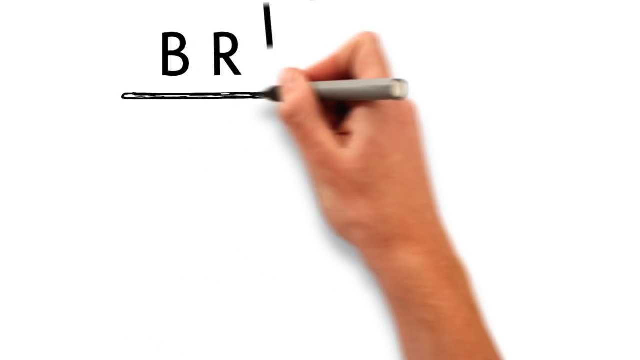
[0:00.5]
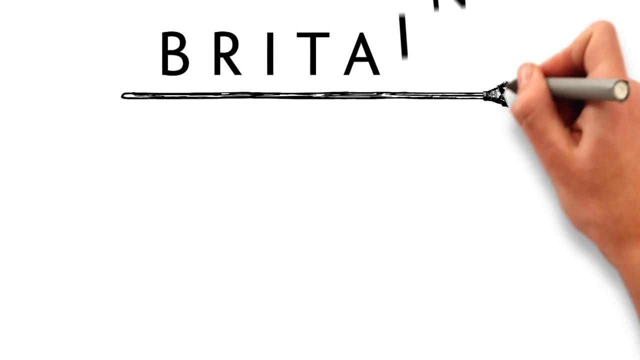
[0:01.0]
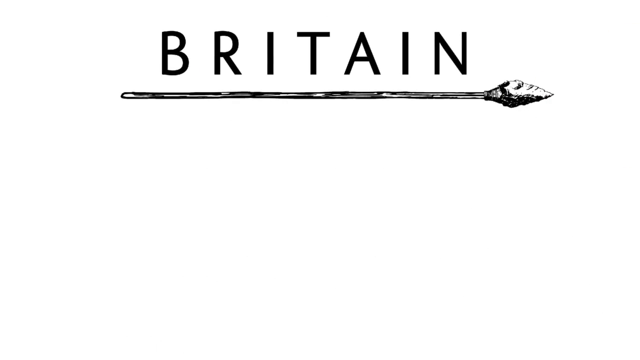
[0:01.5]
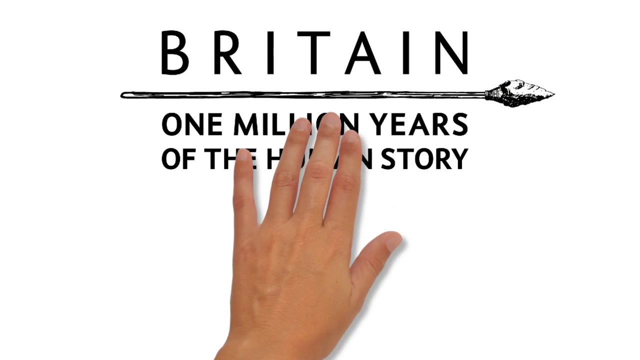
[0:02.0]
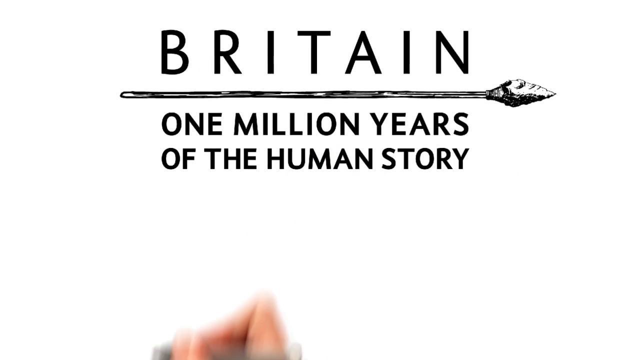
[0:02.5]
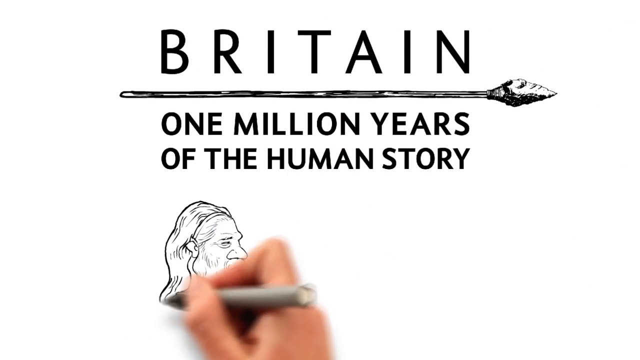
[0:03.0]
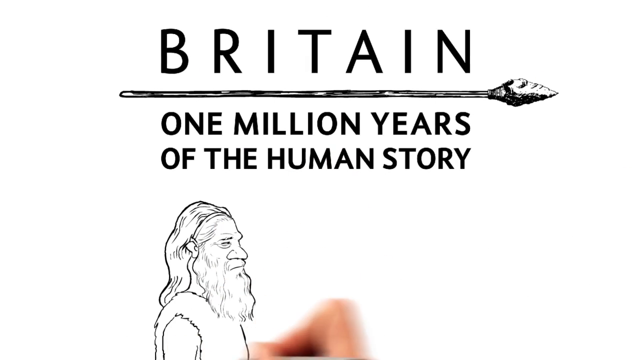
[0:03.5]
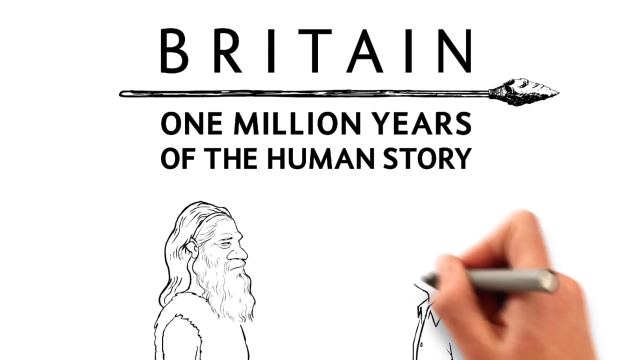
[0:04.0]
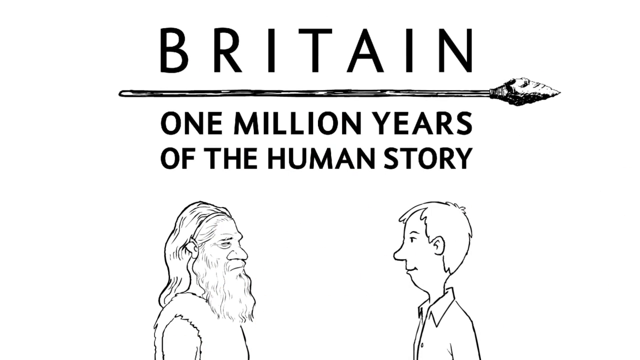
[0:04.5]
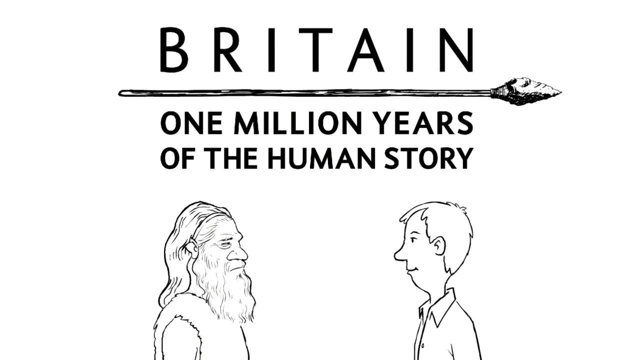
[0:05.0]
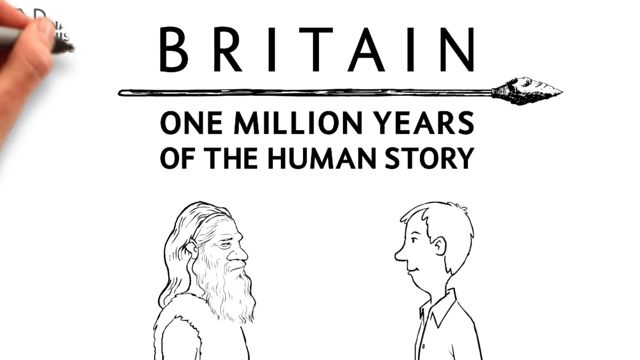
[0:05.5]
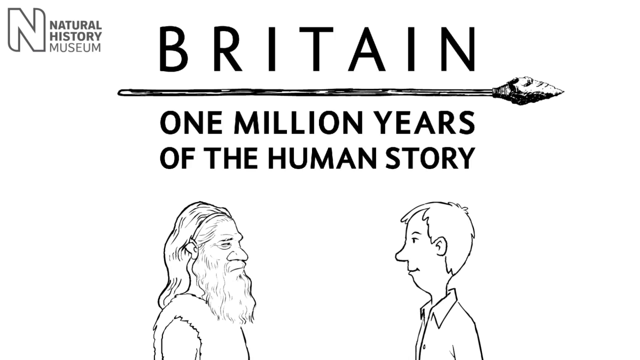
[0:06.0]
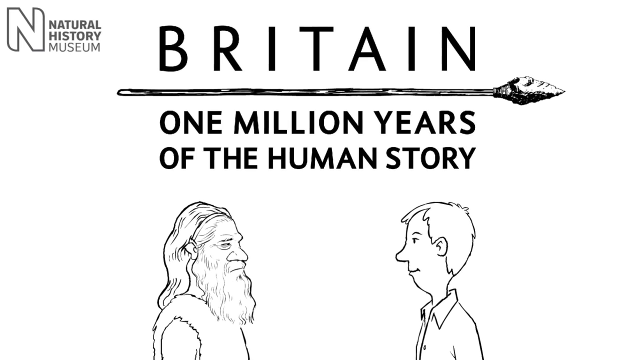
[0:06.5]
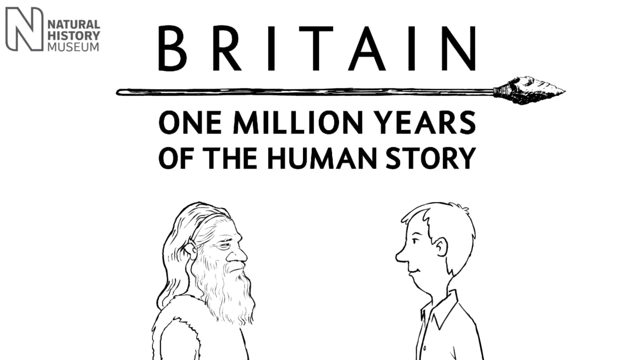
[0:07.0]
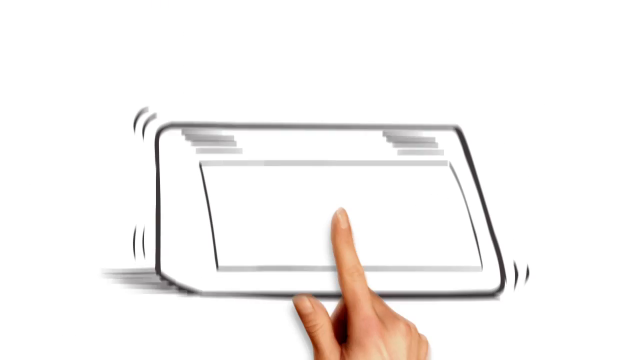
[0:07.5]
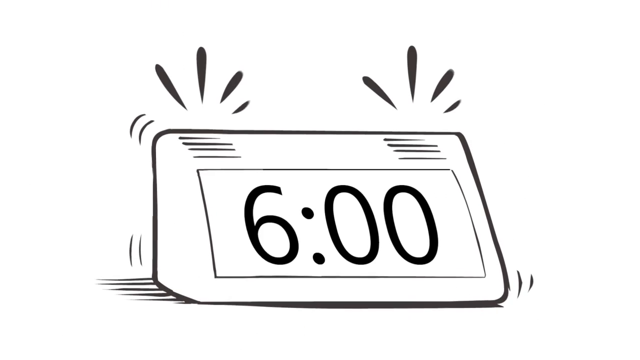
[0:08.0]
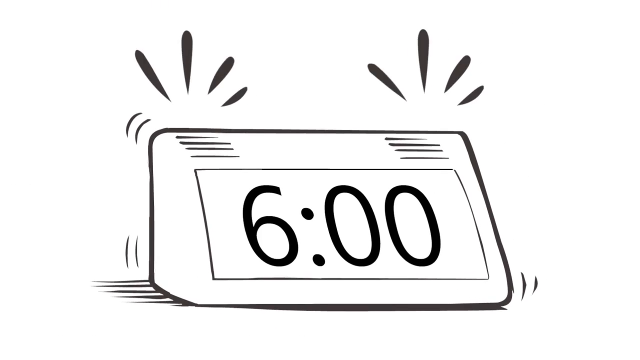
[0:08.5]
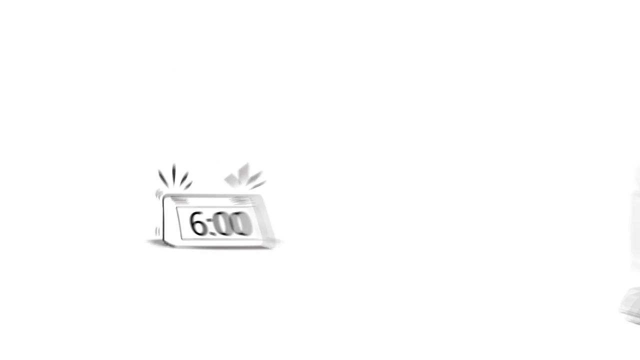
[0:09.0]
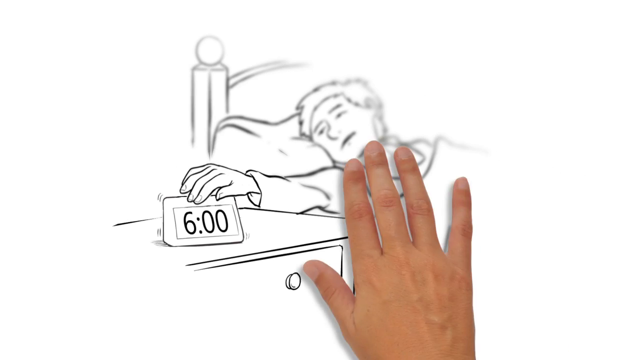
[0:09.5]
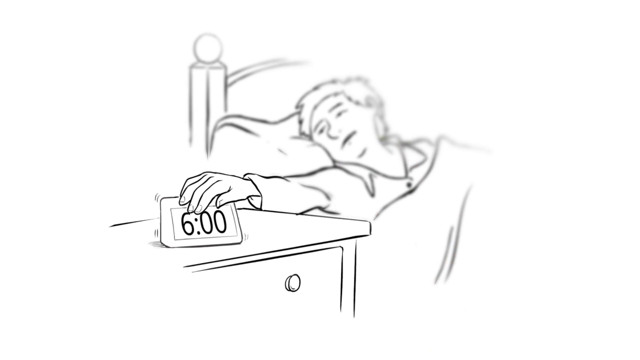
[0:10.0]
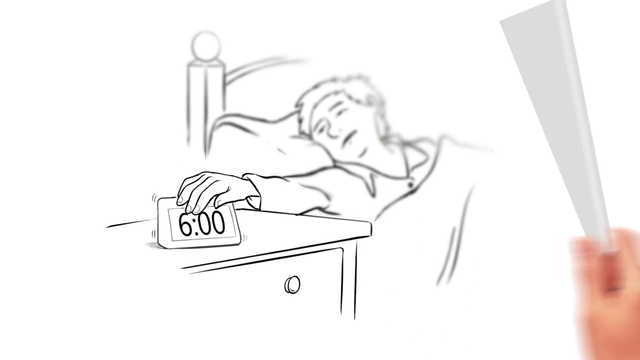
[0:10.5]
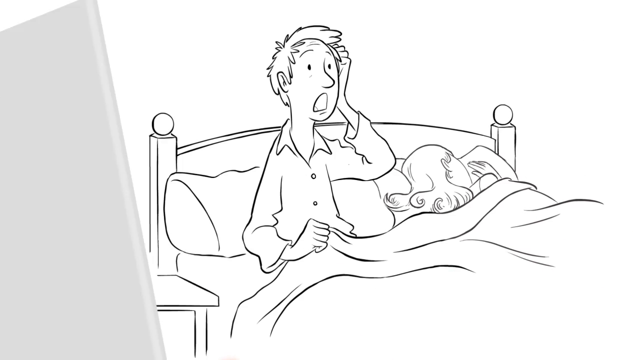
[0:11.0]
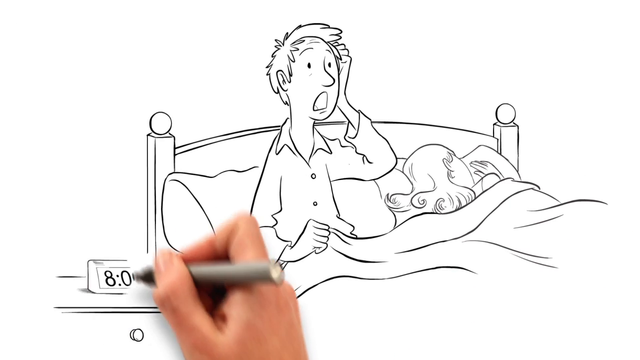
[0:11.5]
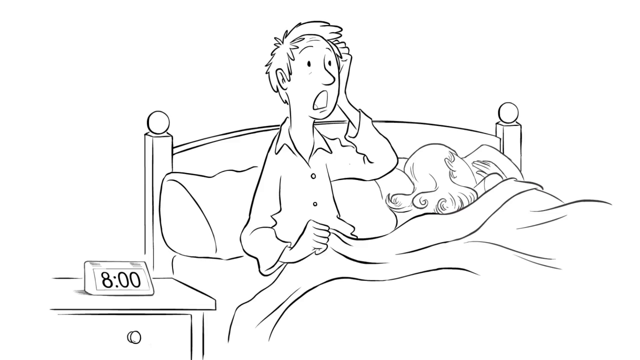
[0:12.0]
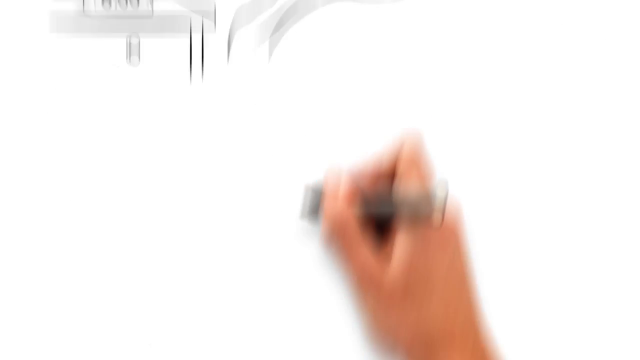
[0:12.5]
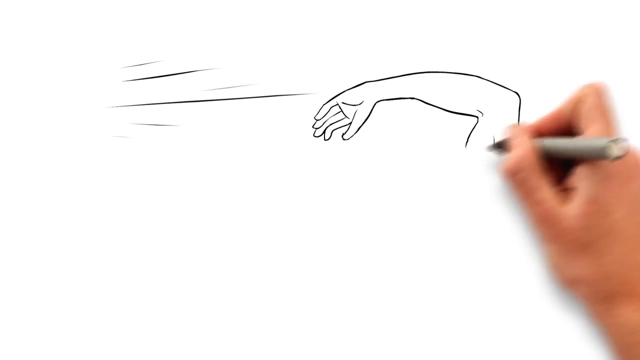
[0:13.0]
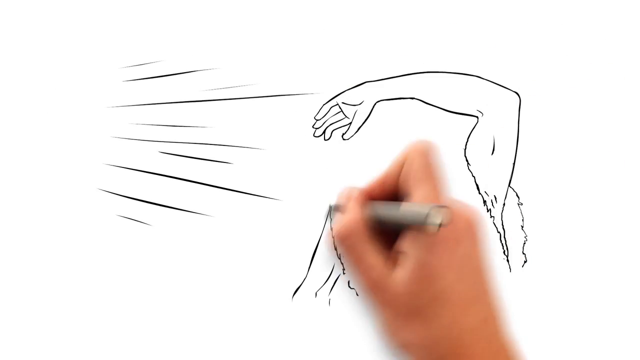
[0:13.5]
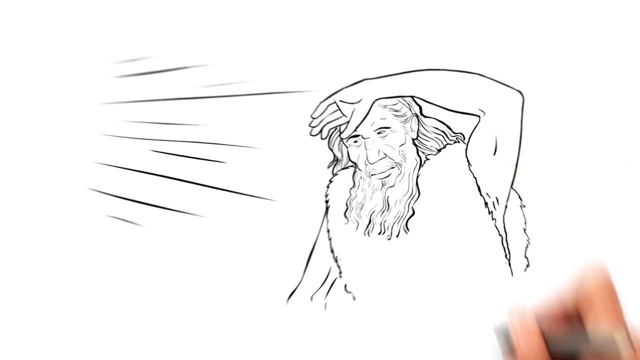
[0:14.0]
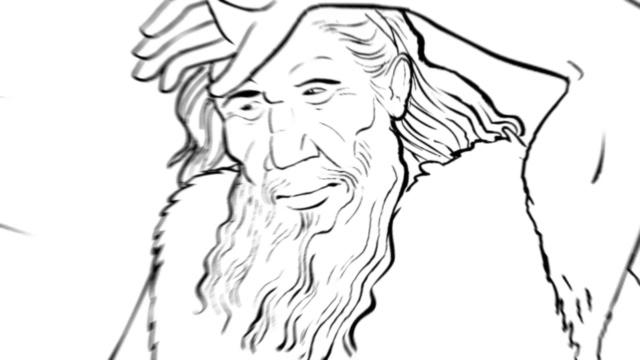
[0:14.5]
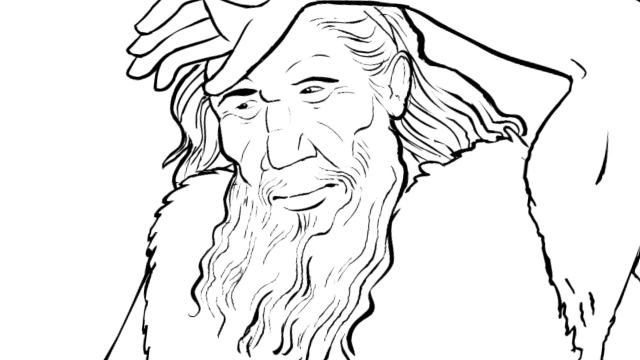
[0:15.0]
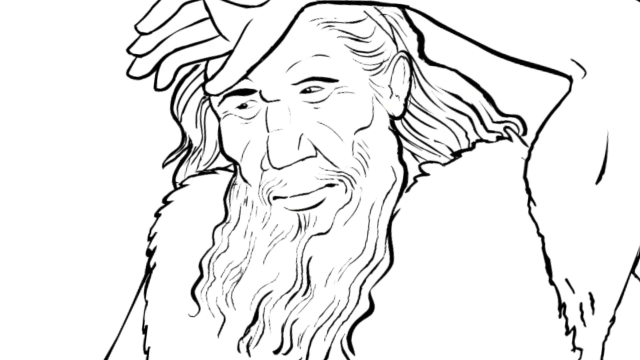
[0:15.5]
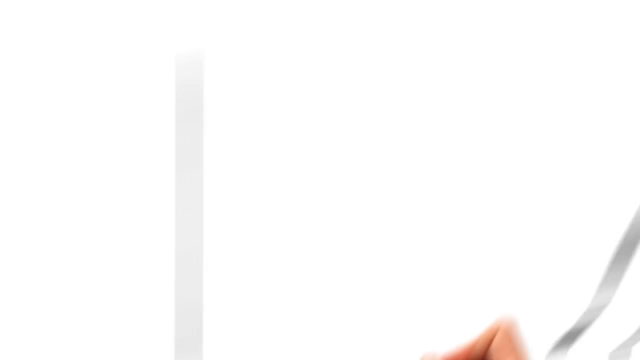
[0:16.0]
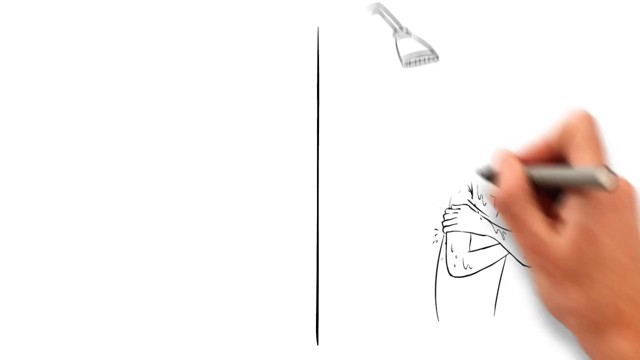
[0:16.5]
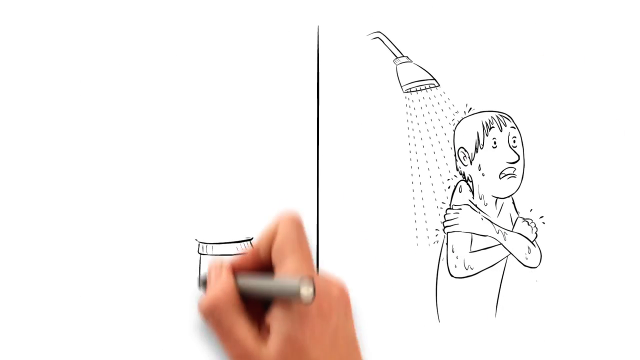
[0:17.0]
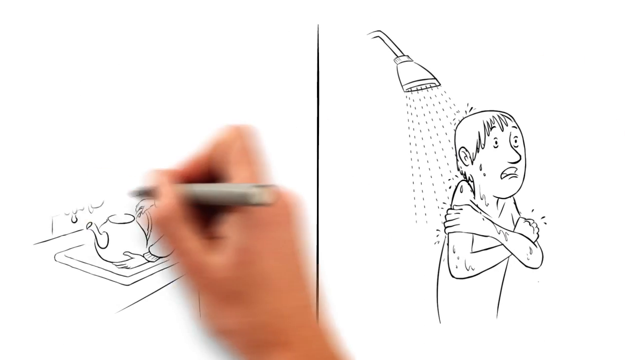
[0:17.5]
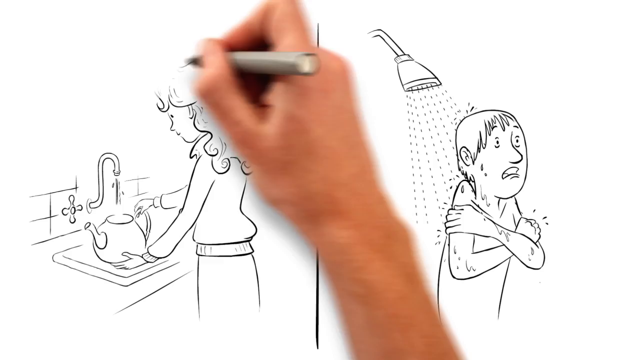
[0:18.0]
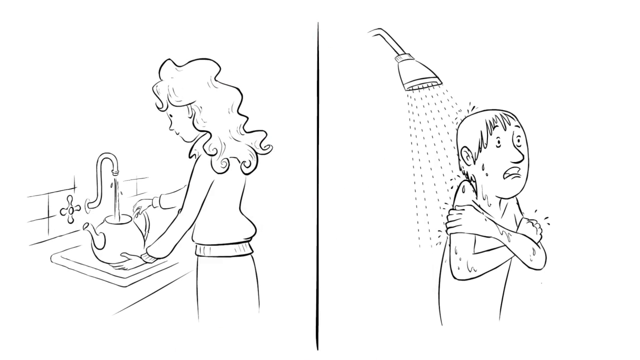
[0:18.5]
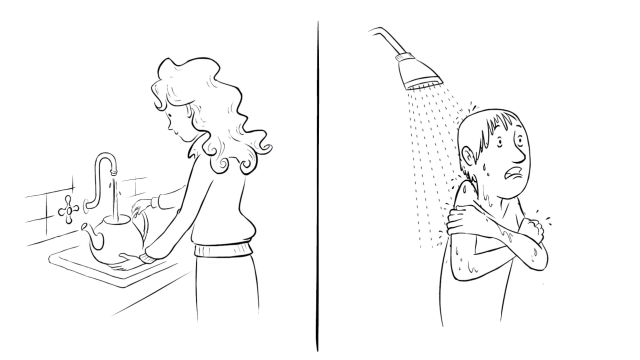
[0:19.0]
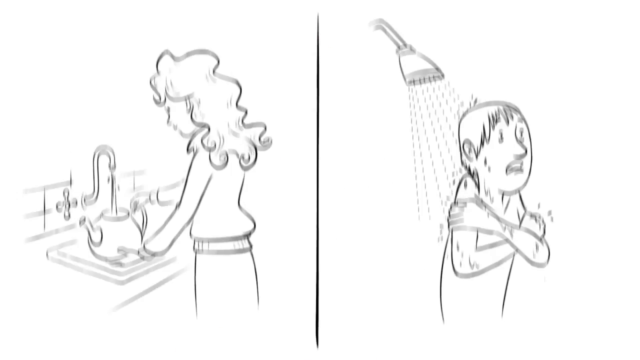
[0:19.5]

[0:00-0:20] What looks like somebody writing on a whiteboard appears, and then a graphic pops up that reads "Britain, one million years of the human story," with a spear in the middle of Britain where the text is. A hand with a marker appears to write, though it is a computer graphic. It draws, in cartoon style, an old bearded man on the left and a young man on the right, and the top left reads "Natural History Museum." Next comes a black-and-white cartoon of what looks like an alarm clock reading six o'clock, and a cartoon man reaching over as if turning off the clock. He is then drawn sitting up in bed looking surprised as the clock reads eight o'clock, with what looks like his partner sleeping next to him. An image of a man with long hair and a beard follows, and then a split screen shows the same cartoon modern man showering alongside what looks like a woman filling a kettle.